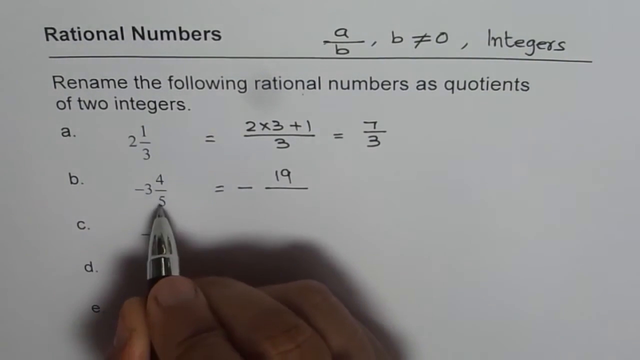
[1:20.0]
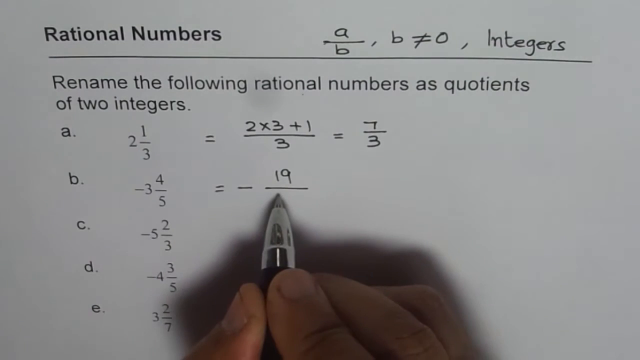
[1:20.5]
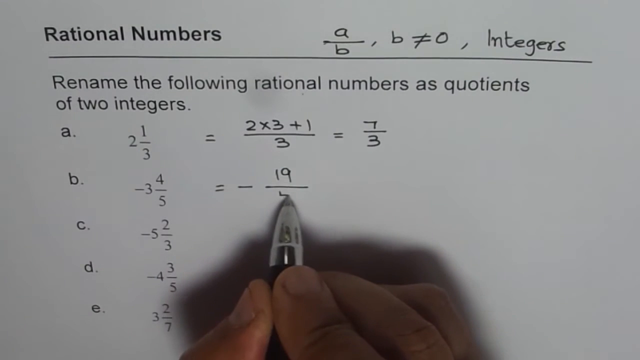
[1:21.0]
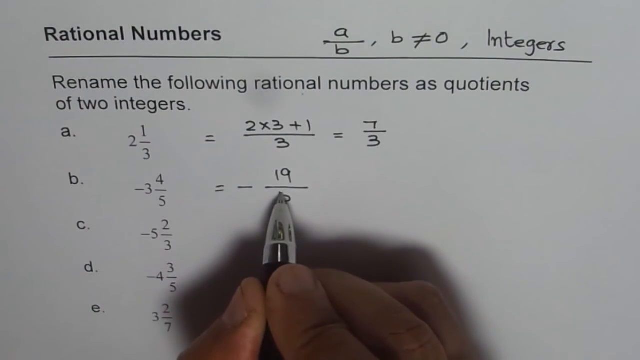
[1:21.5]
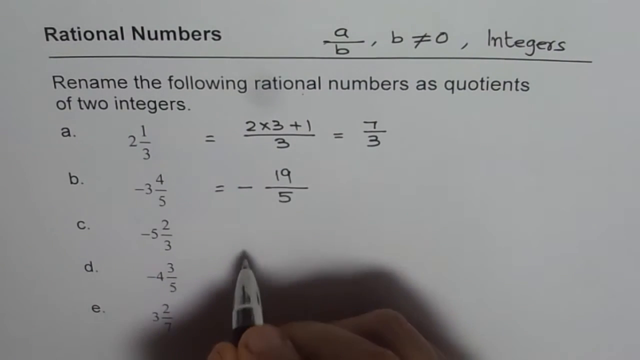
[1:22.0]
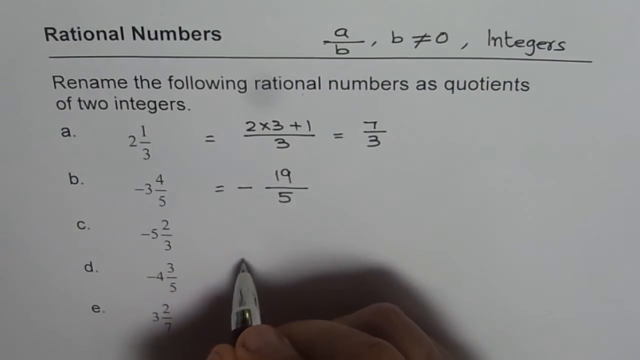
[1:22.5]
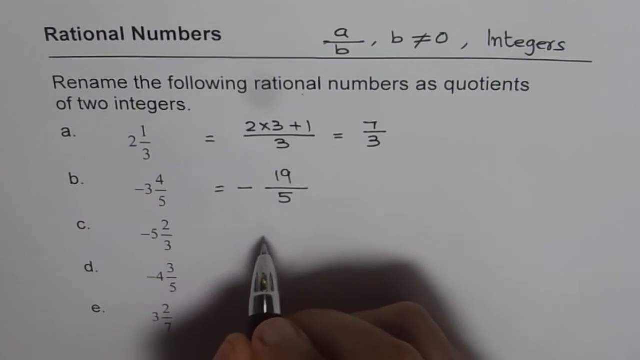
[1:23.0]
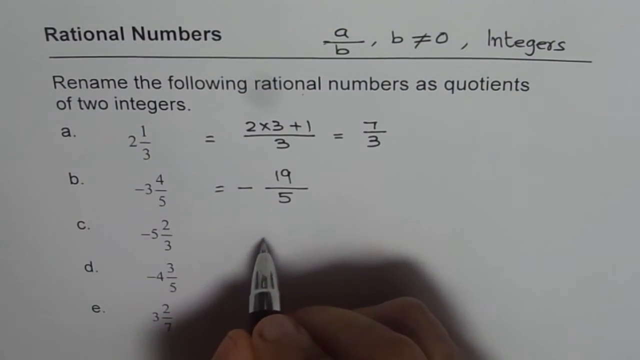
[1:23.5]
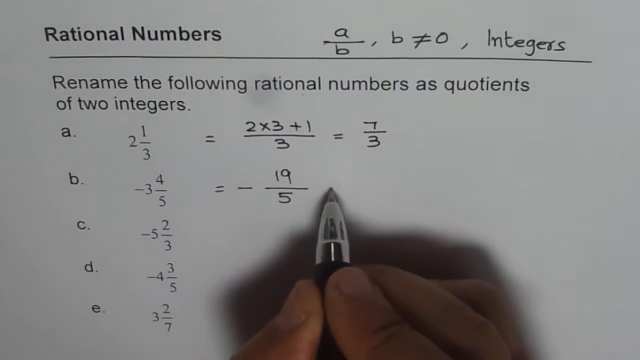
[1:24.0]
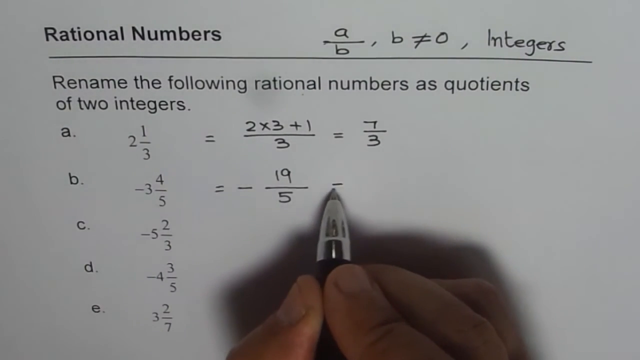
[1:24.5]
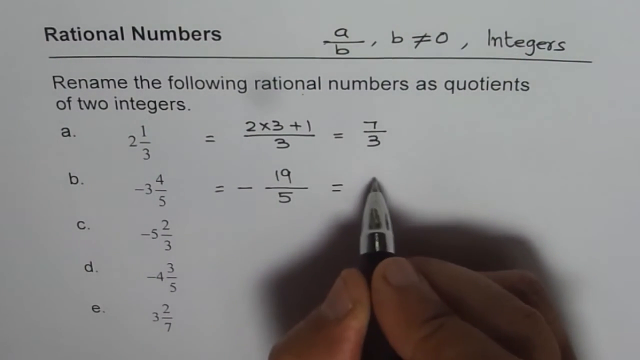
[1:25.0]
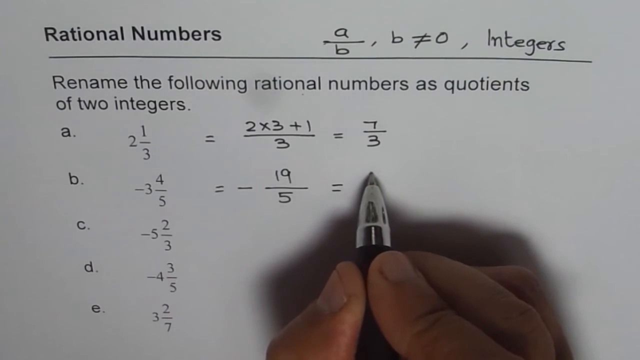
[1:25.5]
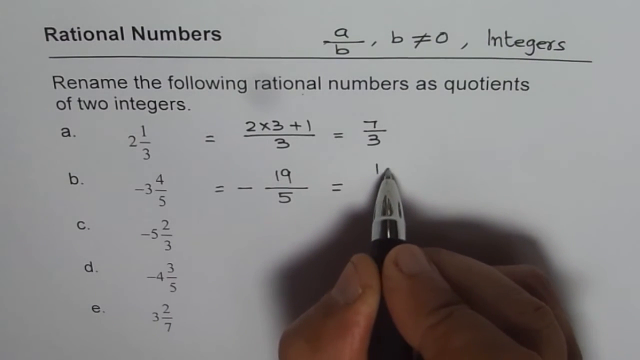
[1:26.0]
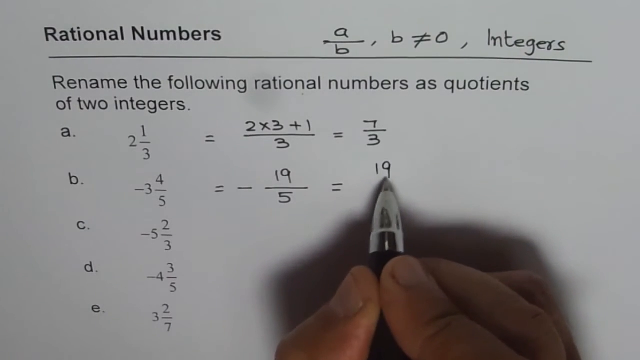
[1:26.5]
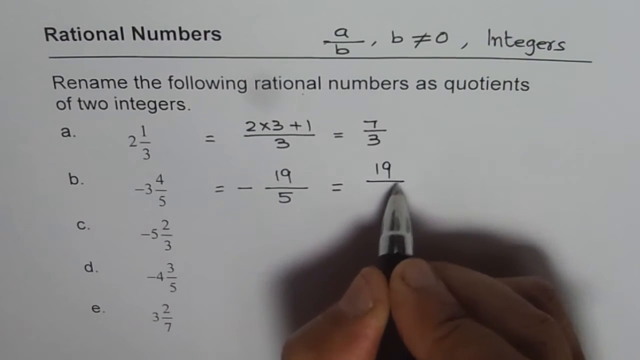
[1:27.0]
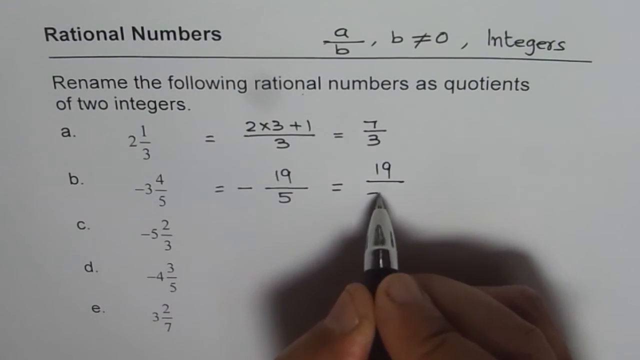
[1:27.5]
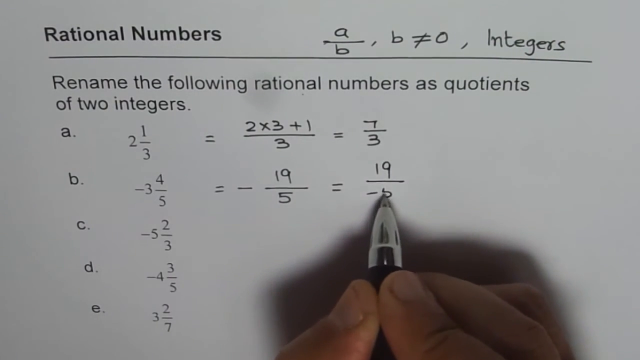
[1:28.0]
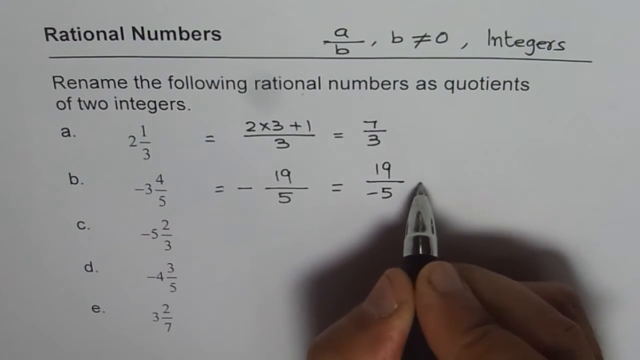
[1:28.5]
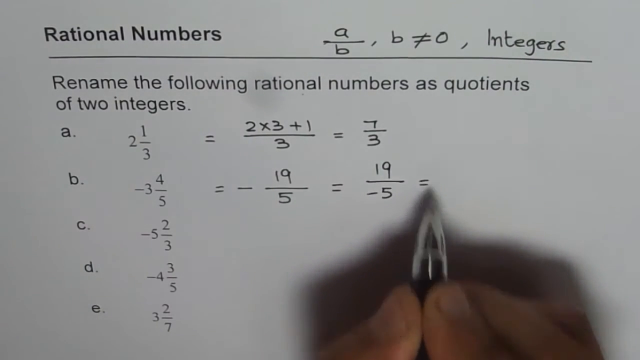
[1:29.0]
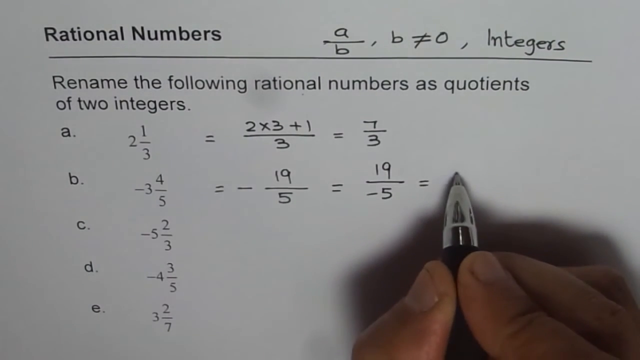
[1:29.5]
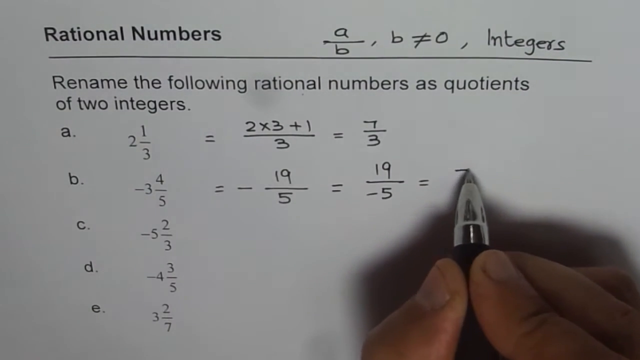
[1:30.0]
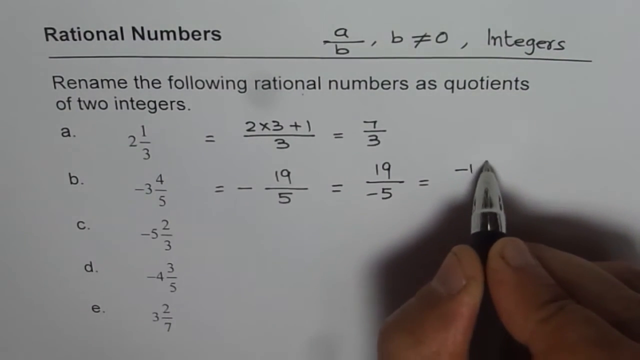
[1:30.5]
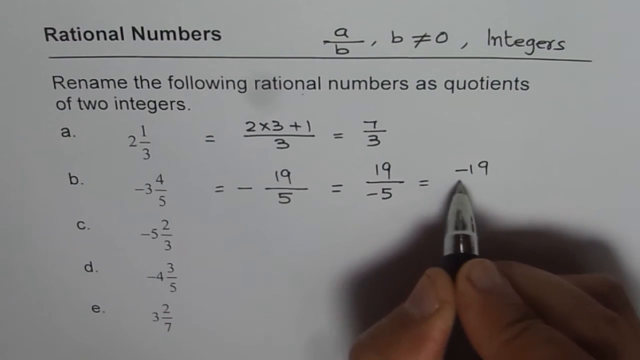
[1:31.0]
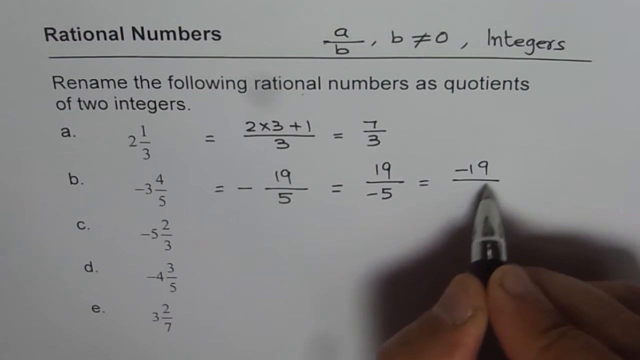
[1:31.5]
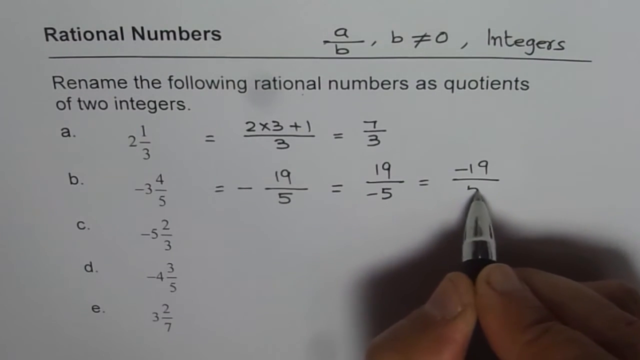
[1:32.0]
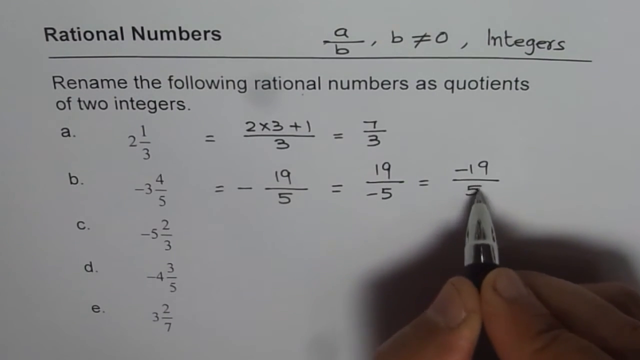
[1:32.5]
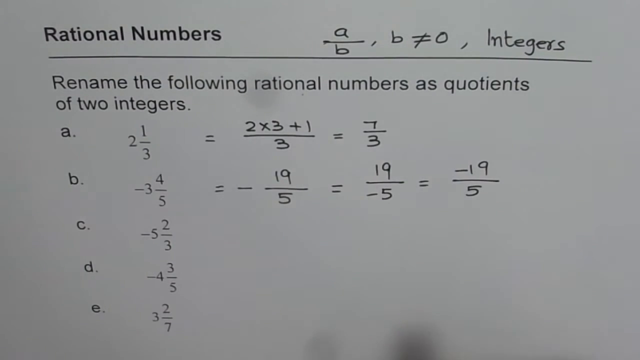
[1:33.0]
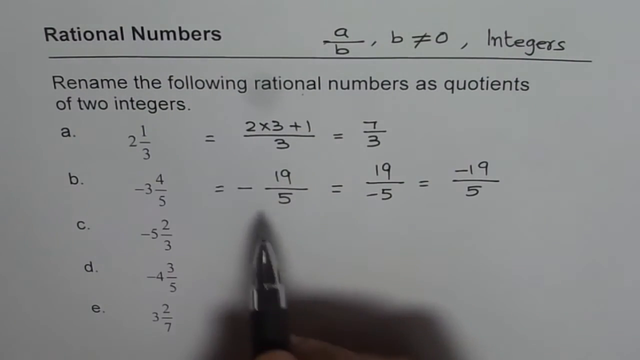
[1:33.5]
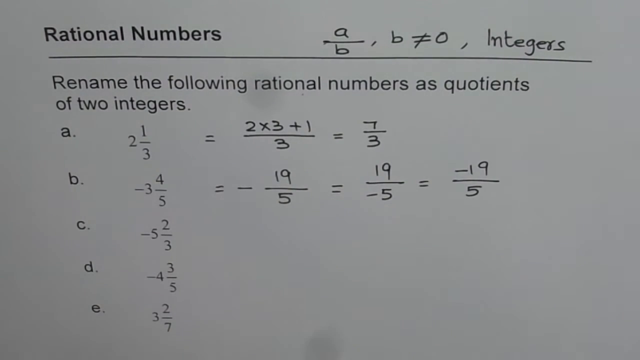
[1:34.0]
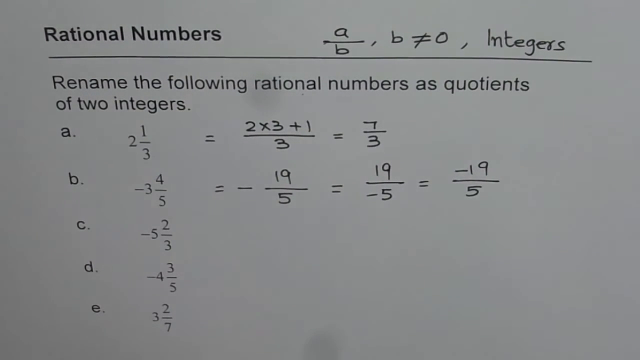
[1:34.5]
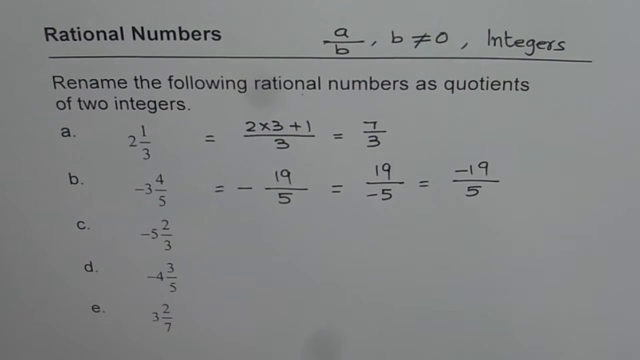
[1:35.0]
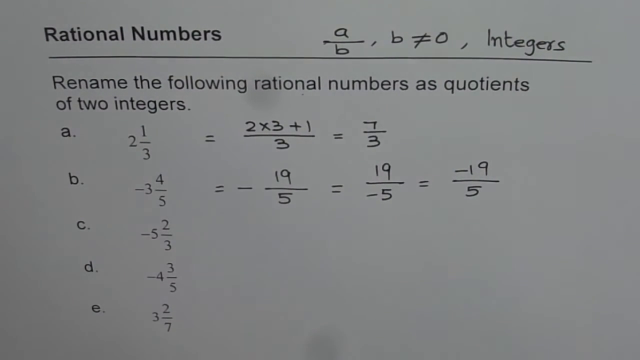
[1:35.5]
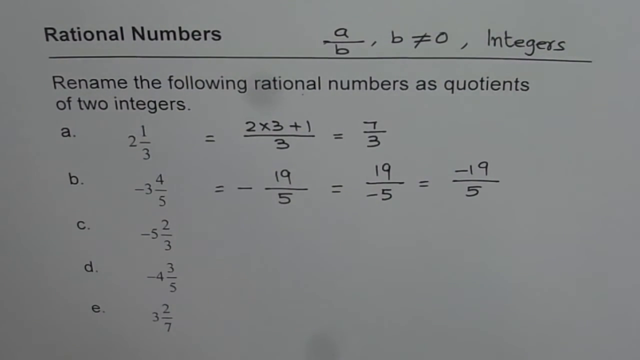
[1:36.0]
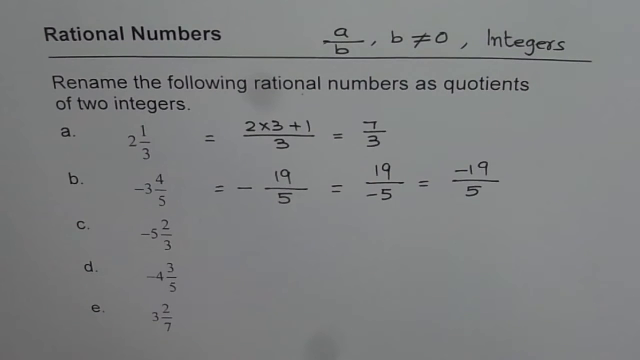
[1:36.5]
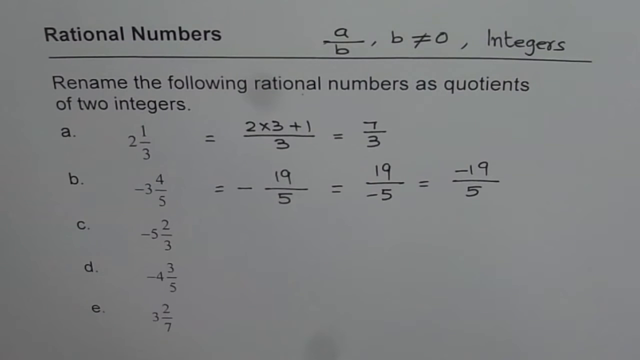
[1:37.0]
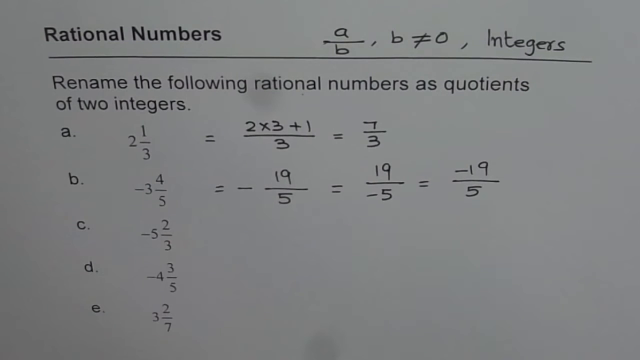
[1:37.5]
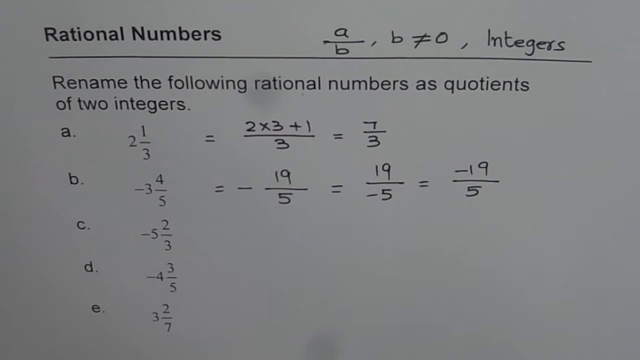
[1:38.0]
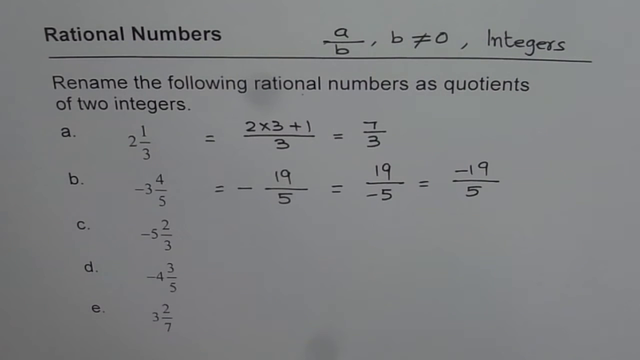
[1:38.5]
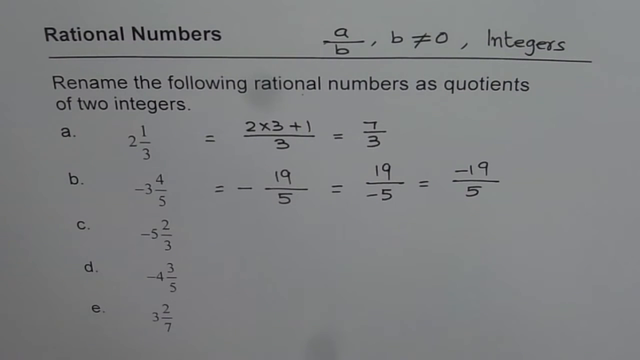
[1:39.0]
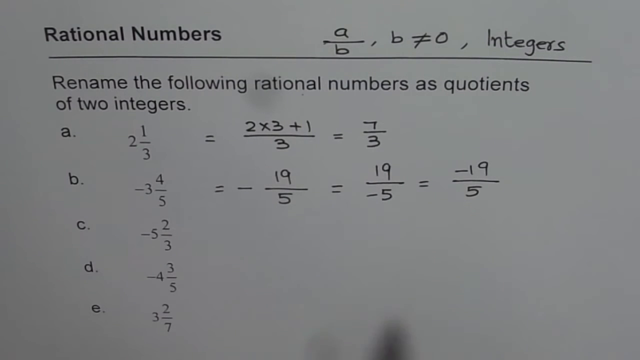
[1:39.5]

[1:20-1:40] The hand writes a 5 under the fraction line, points to different parts of the equation, and continues writing an equals sign, then "19/-5 = -19/5." The handwritten equation beside option B now reads in full: "= -19/5 = 19/-5 = -19/5." The pen tip then scans across the new equation, pointing at different parts of it as if showing how the breakdown was reached. The handwriting is black, neat and clear, written with the same pen and hand. Breakdowns of options A and B are now on the page.